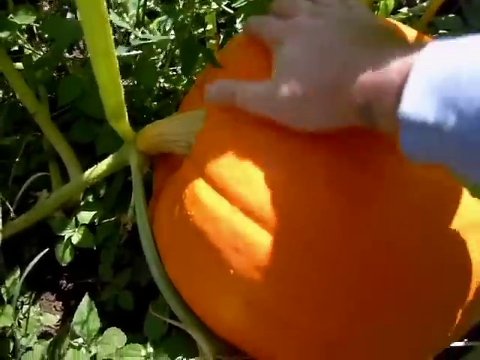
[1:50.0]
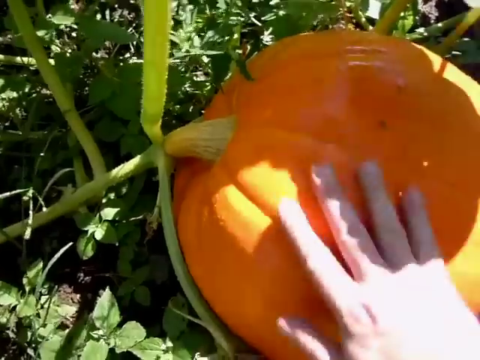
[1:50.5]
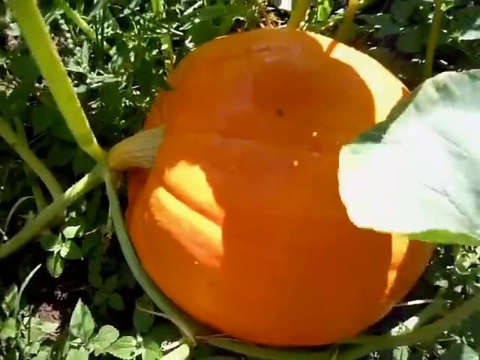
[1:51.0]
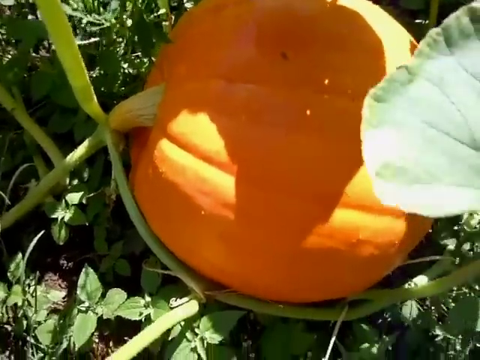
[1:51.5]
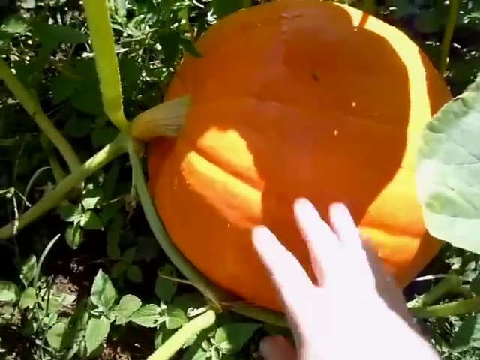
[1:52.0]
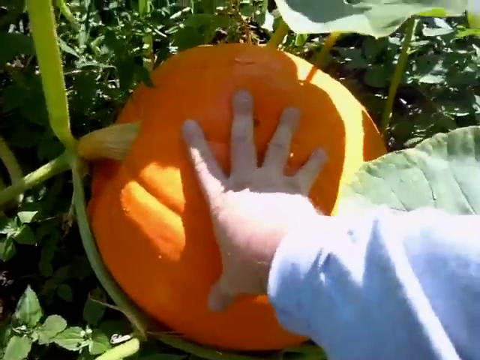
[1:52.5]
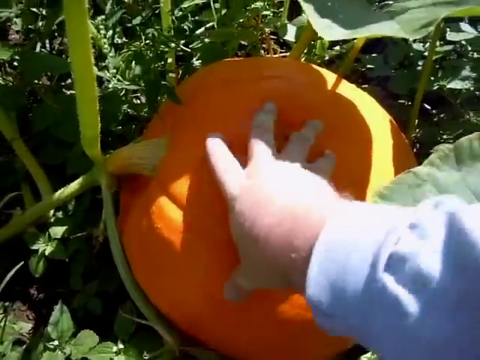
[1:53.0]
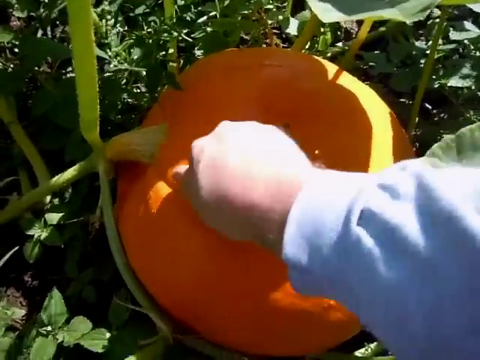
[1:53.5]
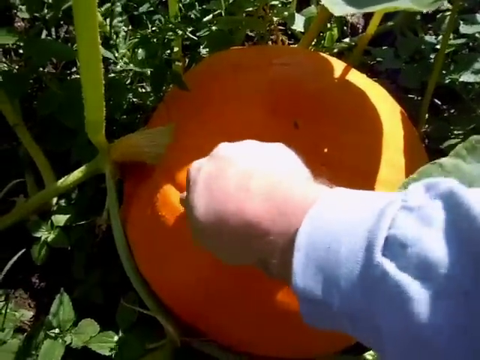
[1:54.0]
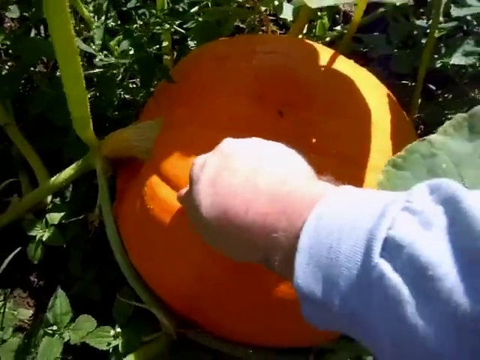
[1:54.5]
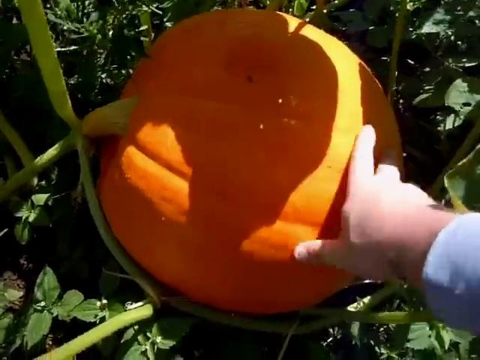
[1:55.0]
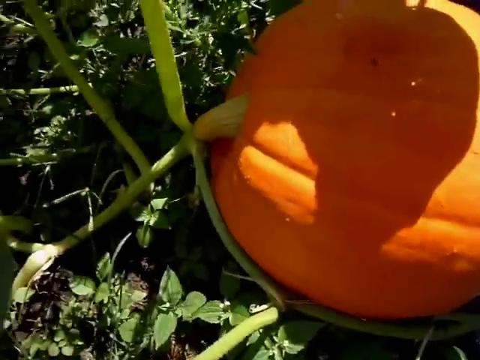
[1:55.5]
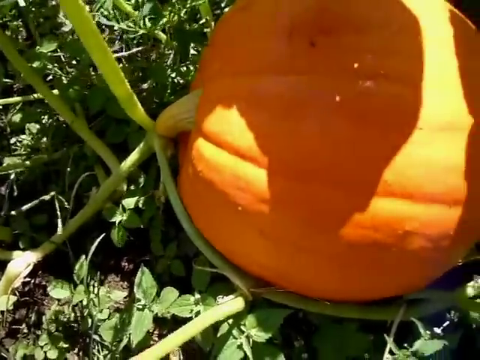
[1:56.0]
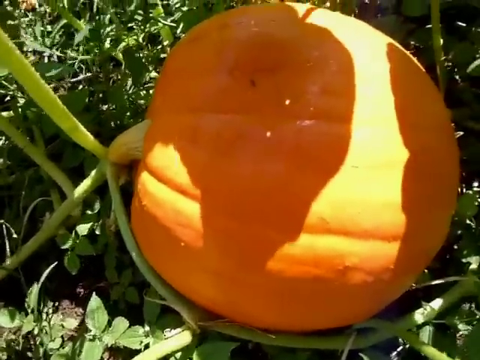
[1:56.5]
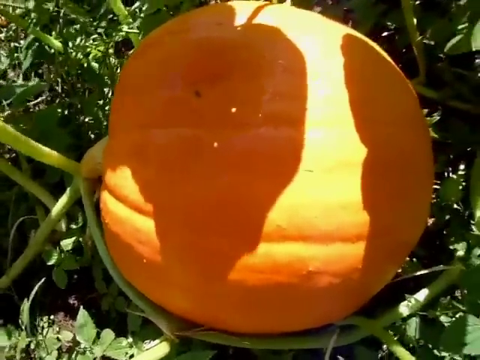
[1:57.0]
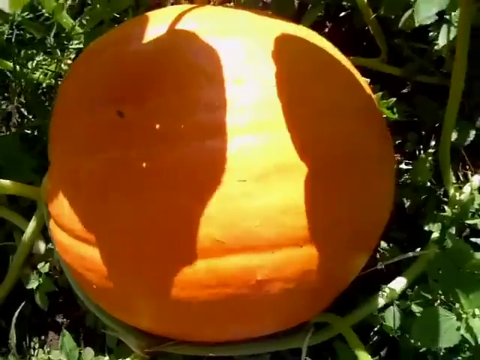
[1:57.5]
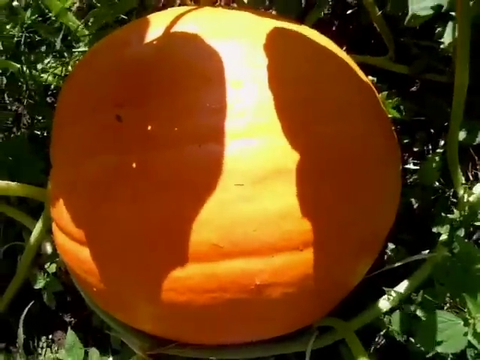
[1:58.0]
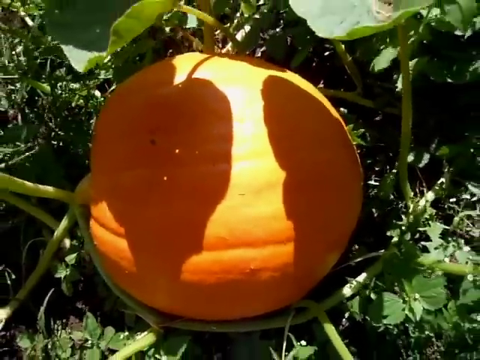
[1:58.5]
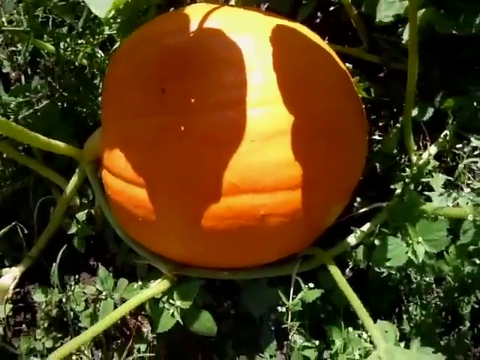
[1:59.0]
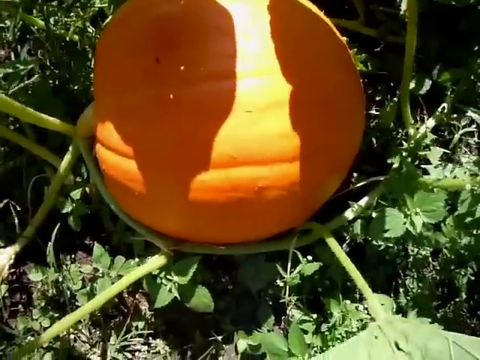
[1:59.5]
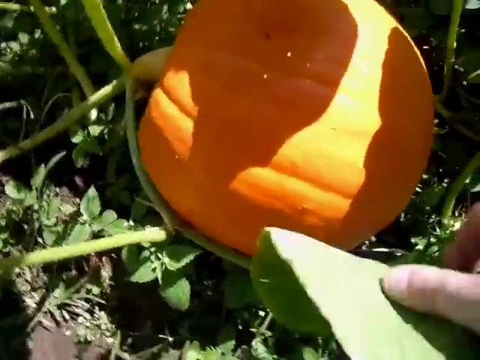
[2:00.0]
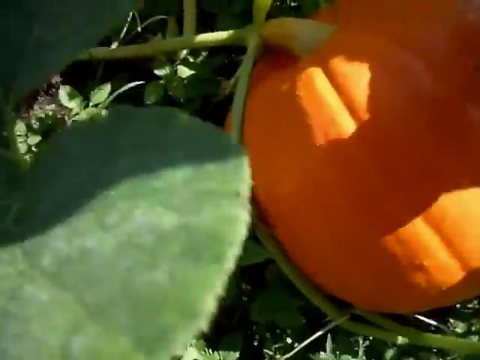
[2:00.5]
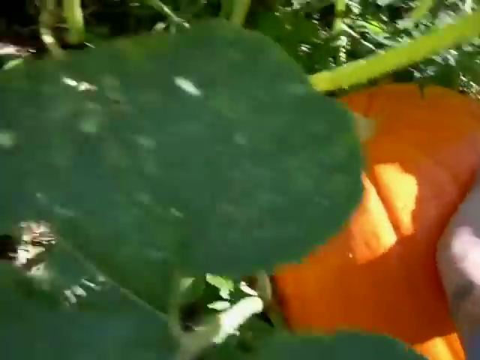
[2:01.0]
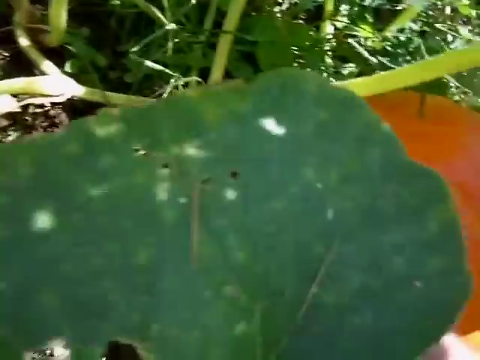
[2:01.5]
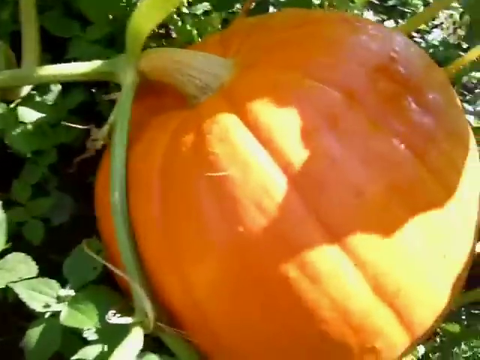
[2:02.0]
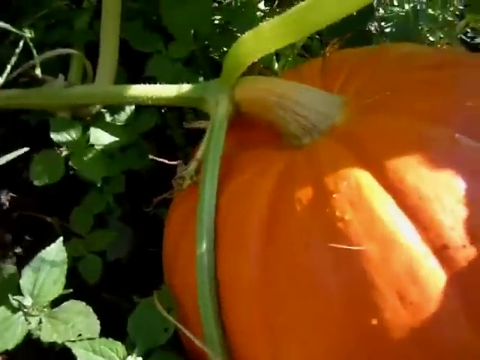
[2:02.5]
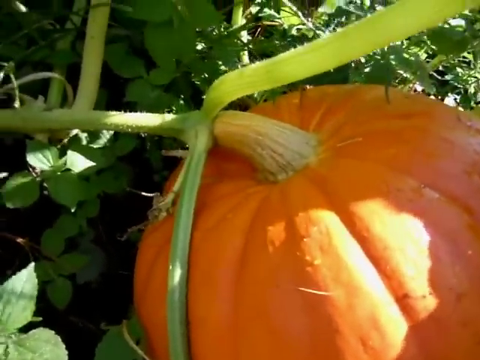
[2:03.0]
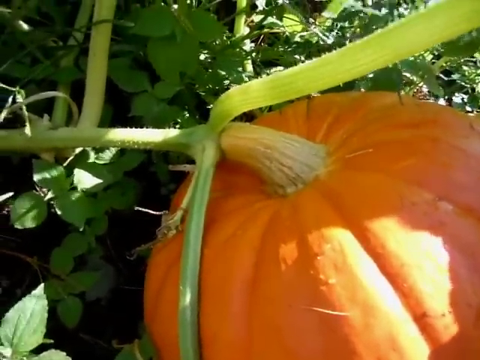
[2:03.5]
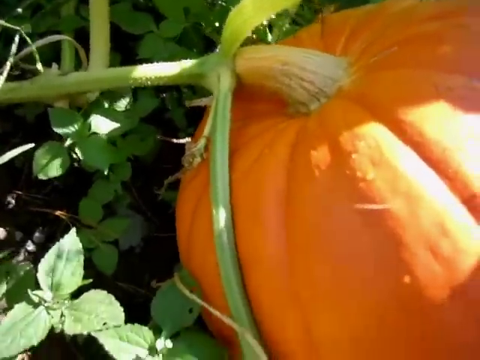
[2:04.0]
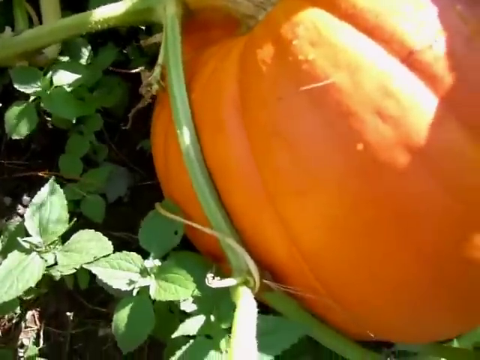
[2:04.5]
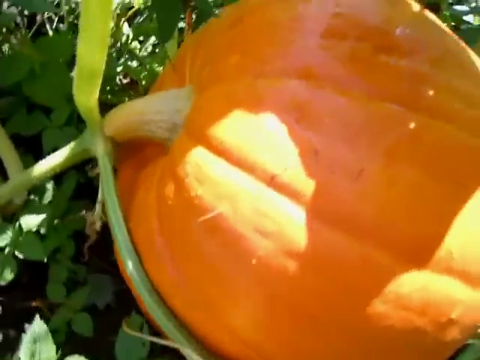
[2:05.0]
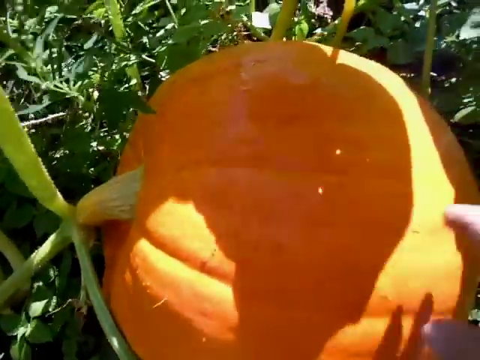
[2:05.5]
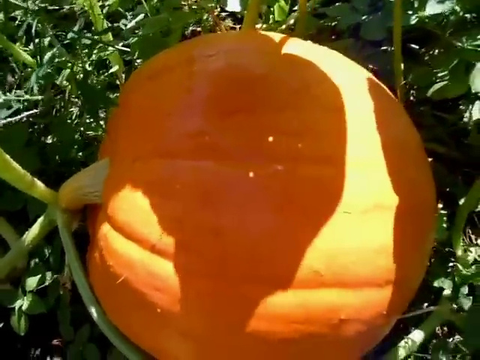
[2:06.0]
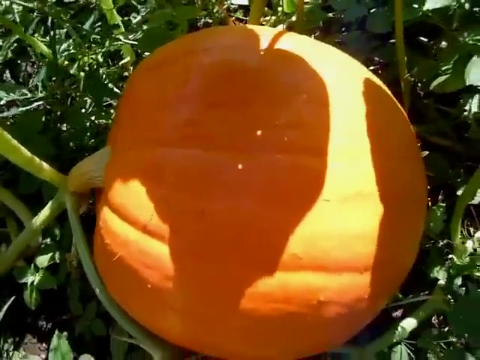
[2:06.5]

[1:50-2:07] A single pumpkin takes up most of the screen, its stem pointing toward the left and still attached to the vine. Someone's right hand is on top of the pumpkin; the person wears a long-sleeved light blue shirt. They brush their right hand against the pumpkin, put their hand against it with a finger splayed, then make a fist and pound on the pumpkin several times. The camera continues to move around the pumpkin, showing it from closer up and farther away, and takes a good look at the stem. As it pulls back, the leaves are blowing in the wind. All around the pumpkin the leaves are dappled with sunlight and are uniformly green and healthy looking. In the background is the bare earth and dirt the pumpkin is growing on.